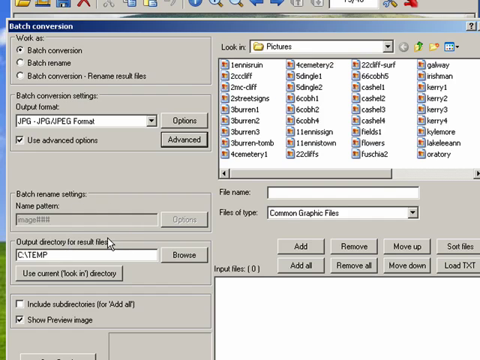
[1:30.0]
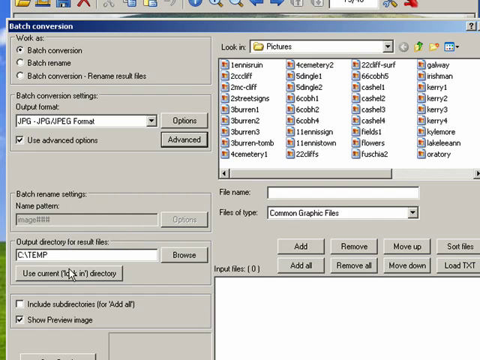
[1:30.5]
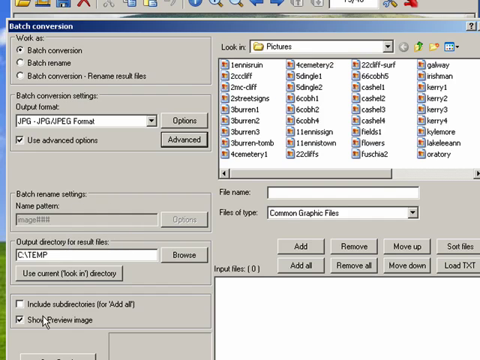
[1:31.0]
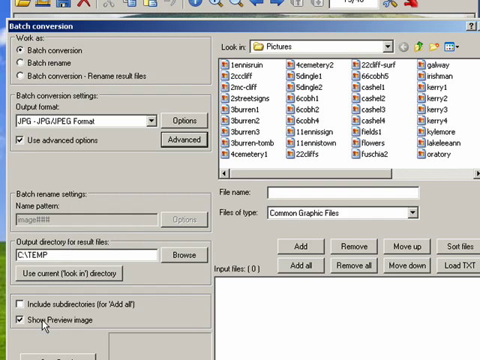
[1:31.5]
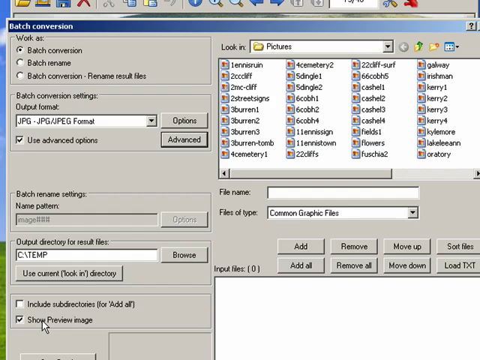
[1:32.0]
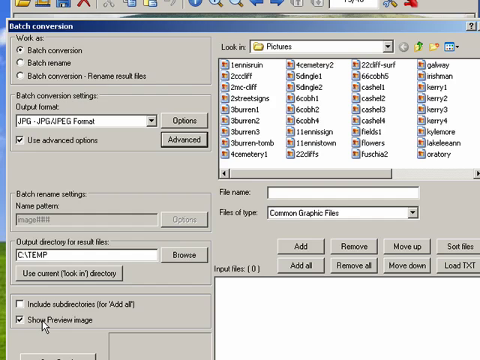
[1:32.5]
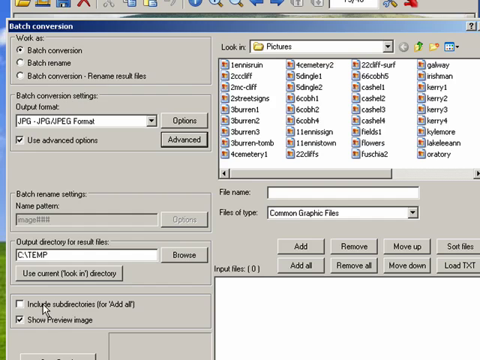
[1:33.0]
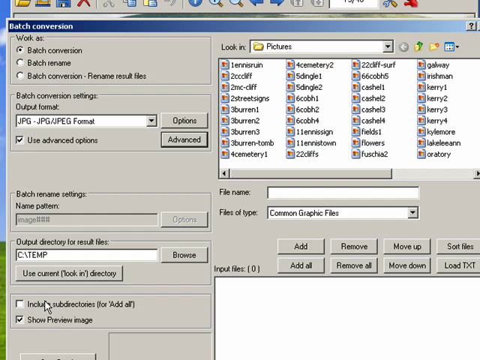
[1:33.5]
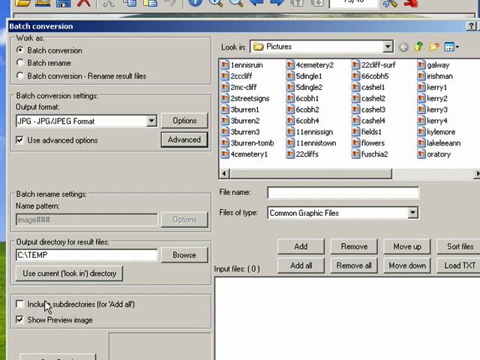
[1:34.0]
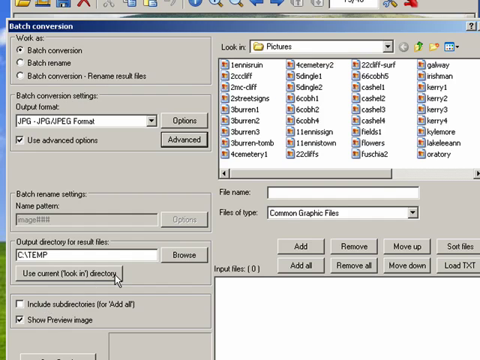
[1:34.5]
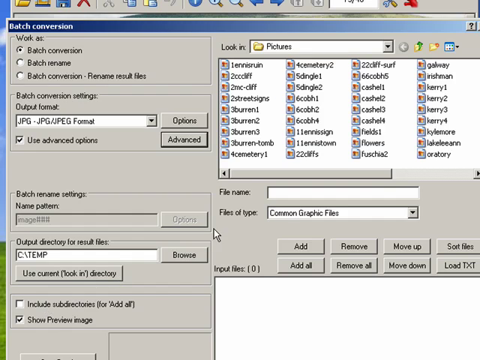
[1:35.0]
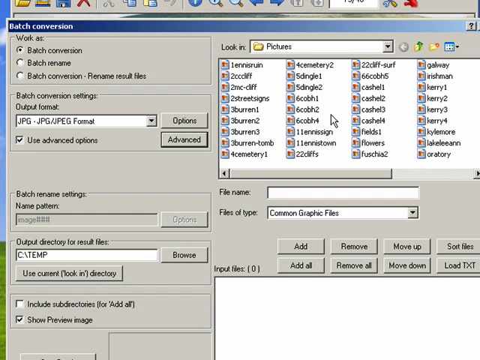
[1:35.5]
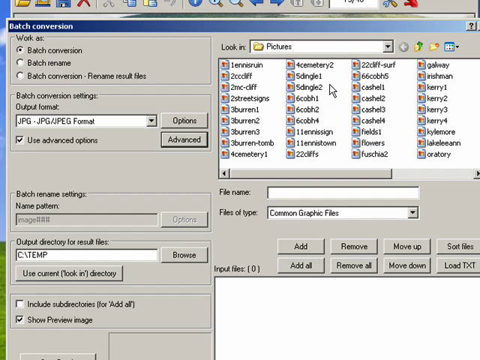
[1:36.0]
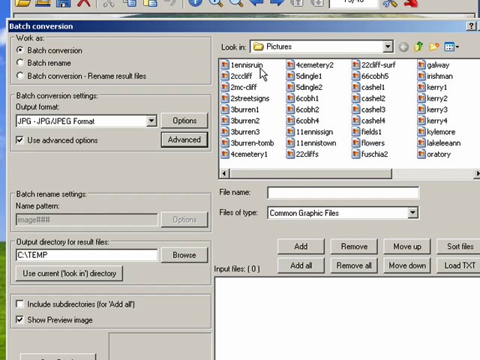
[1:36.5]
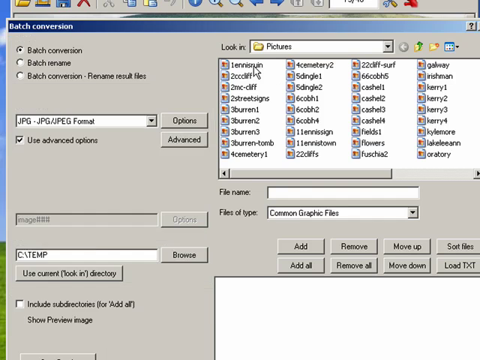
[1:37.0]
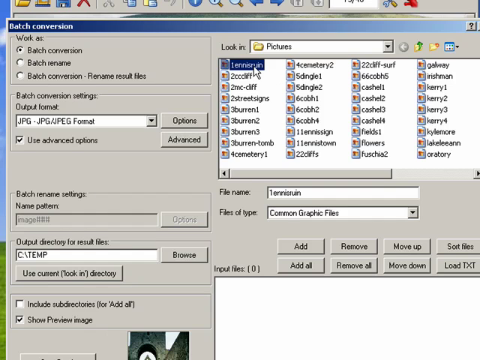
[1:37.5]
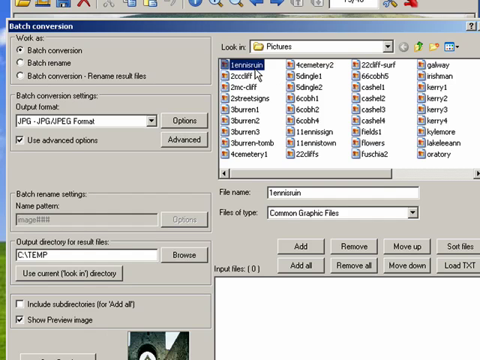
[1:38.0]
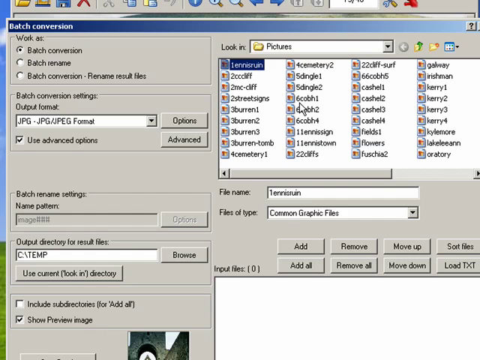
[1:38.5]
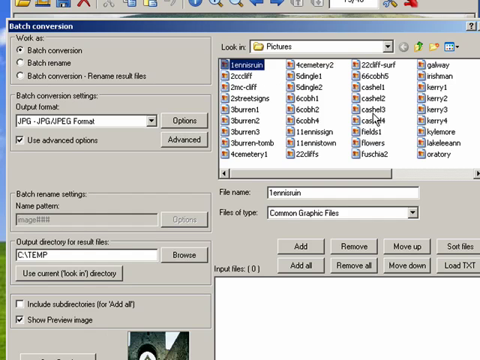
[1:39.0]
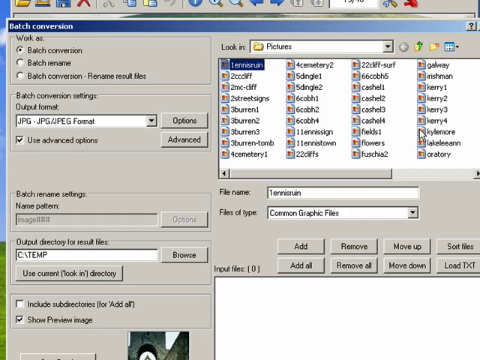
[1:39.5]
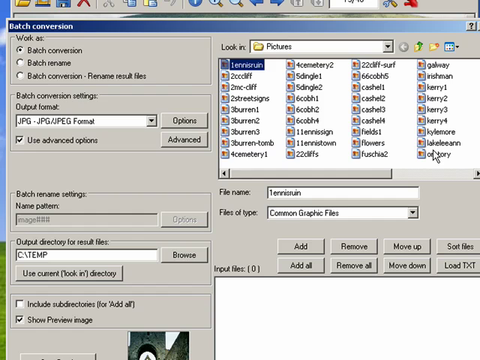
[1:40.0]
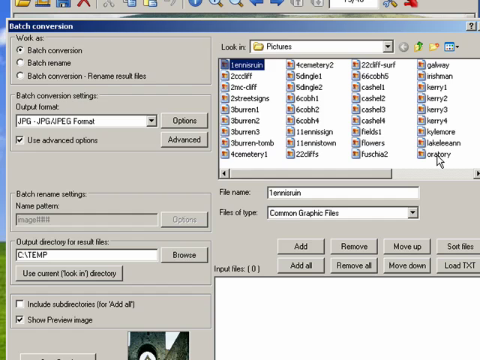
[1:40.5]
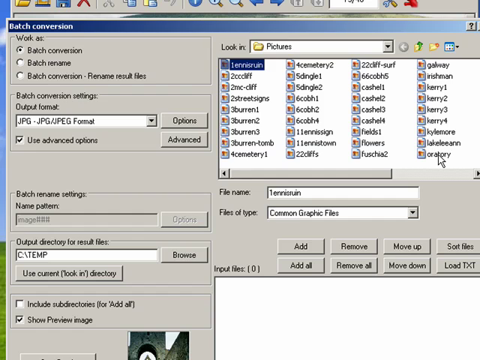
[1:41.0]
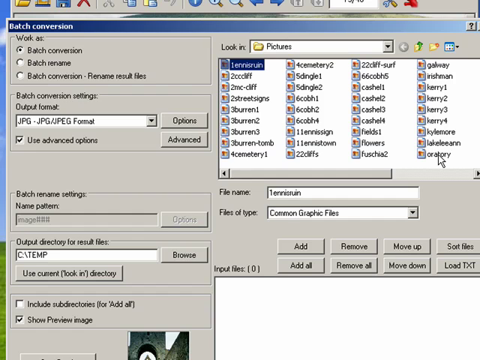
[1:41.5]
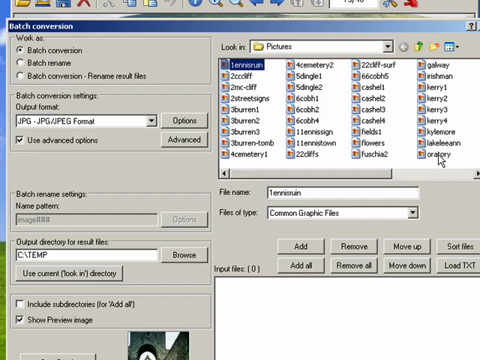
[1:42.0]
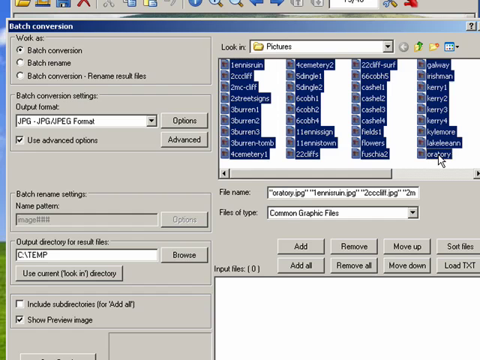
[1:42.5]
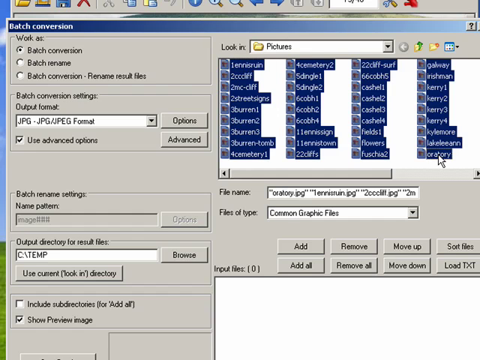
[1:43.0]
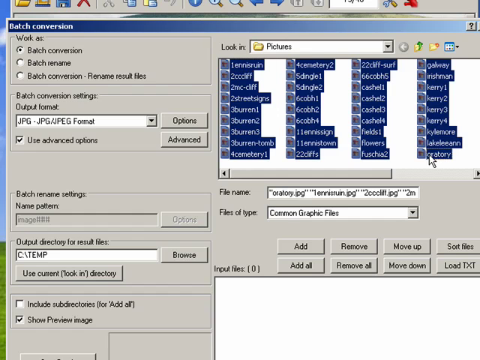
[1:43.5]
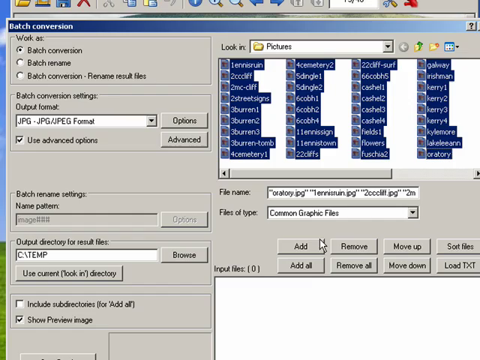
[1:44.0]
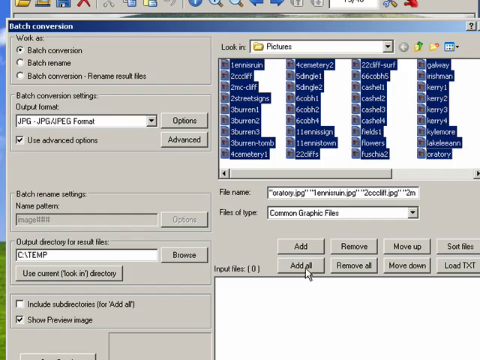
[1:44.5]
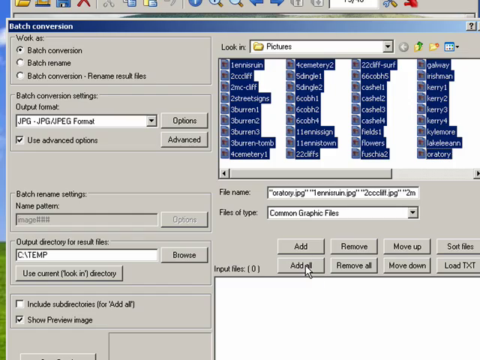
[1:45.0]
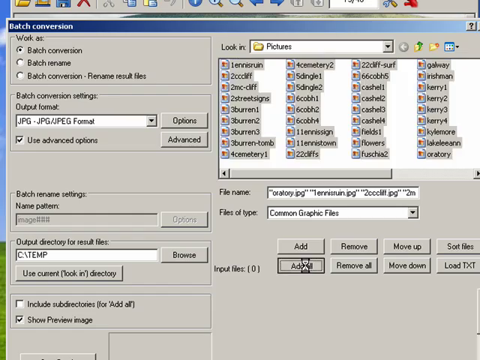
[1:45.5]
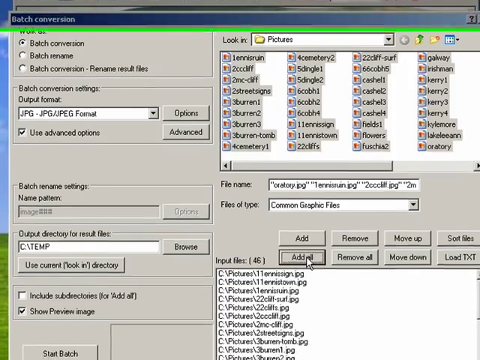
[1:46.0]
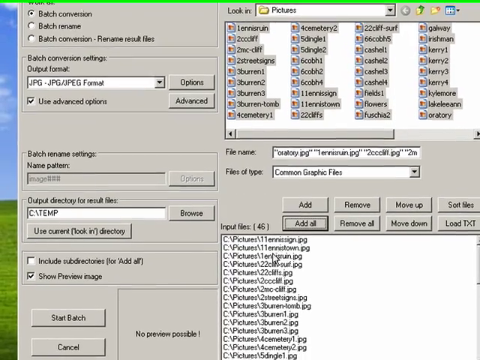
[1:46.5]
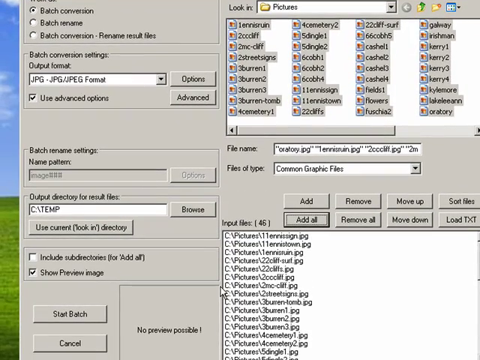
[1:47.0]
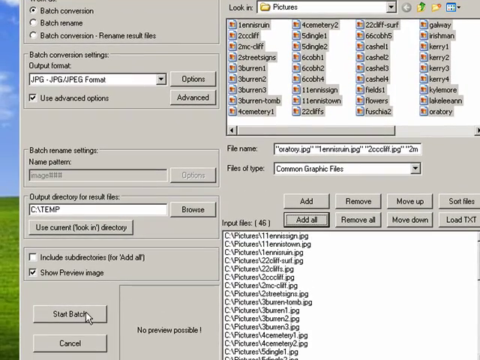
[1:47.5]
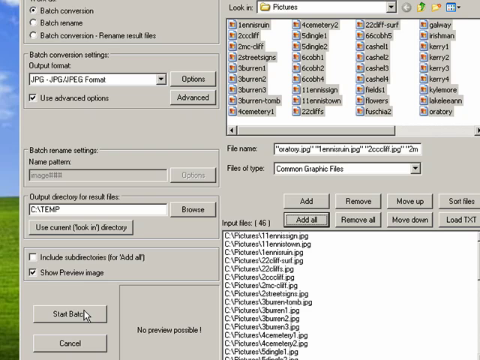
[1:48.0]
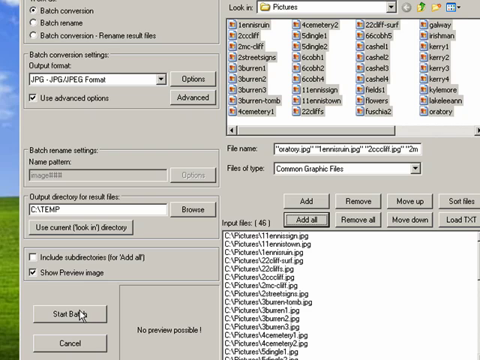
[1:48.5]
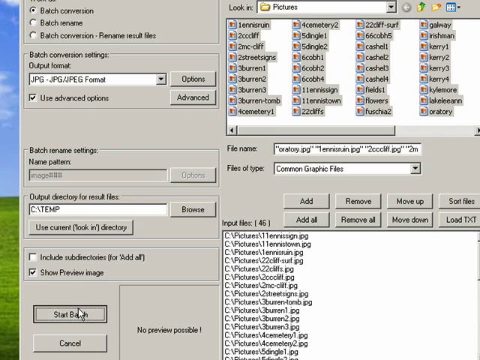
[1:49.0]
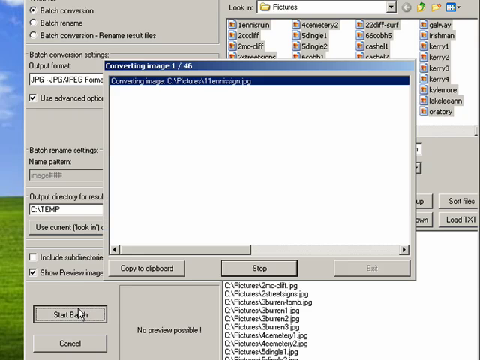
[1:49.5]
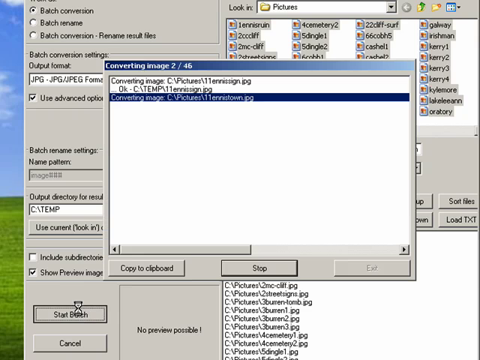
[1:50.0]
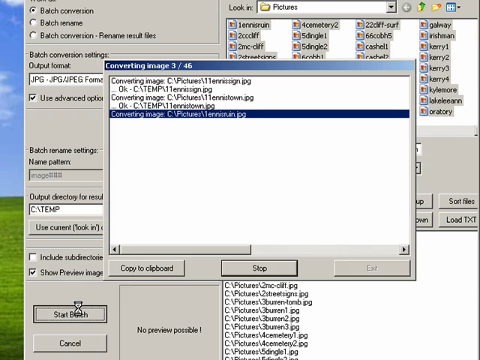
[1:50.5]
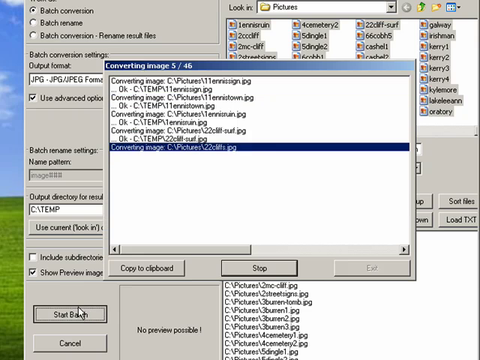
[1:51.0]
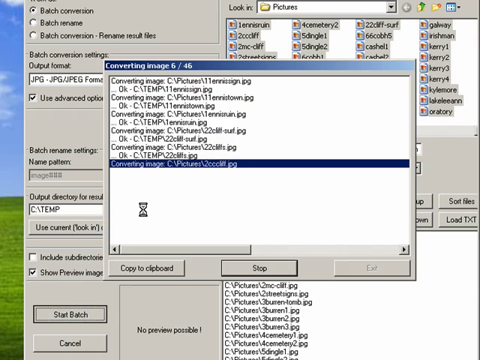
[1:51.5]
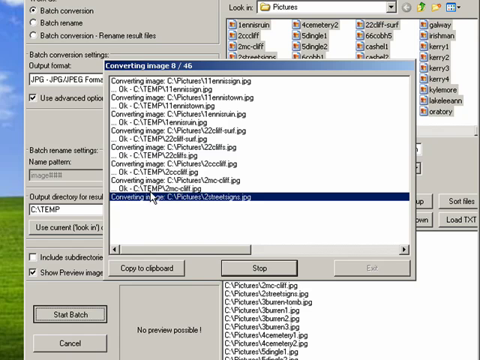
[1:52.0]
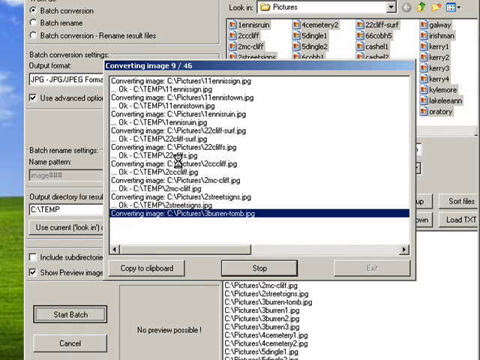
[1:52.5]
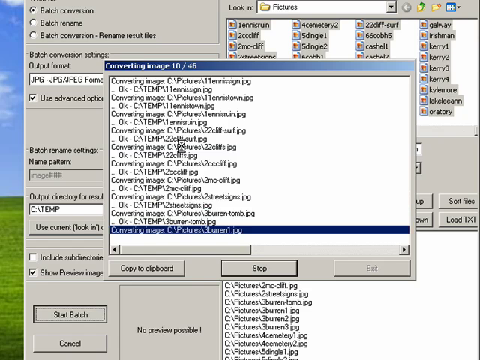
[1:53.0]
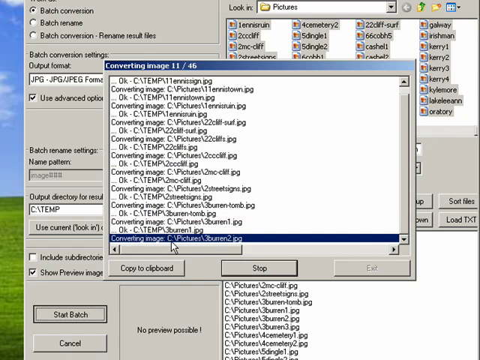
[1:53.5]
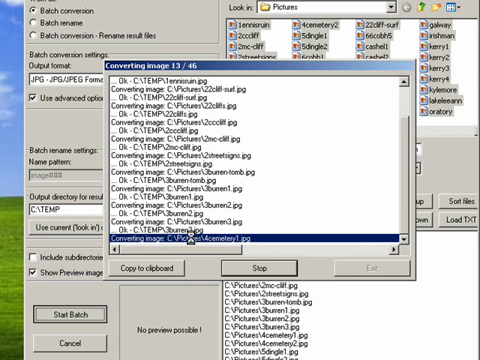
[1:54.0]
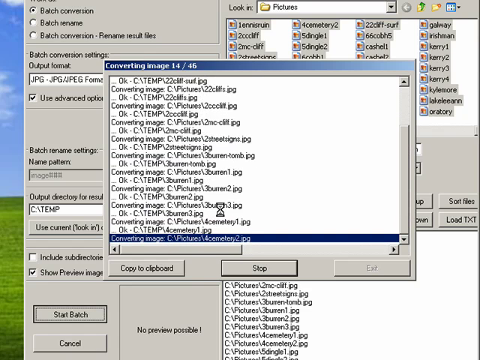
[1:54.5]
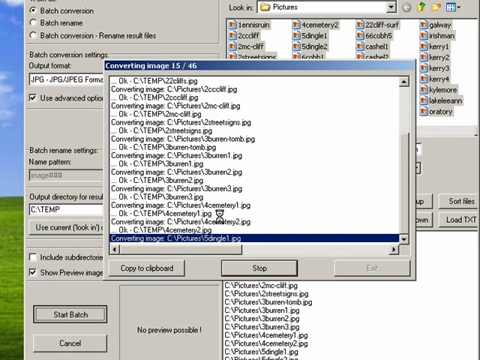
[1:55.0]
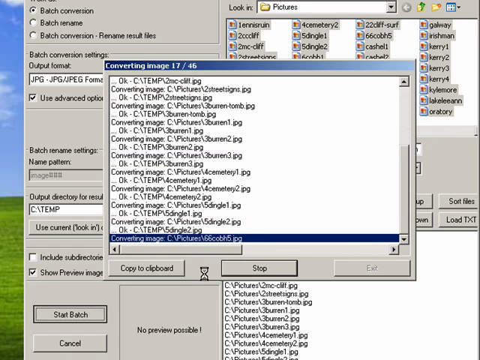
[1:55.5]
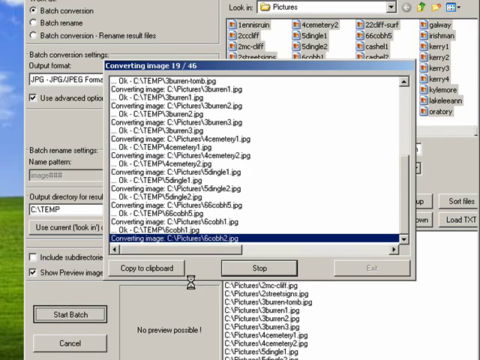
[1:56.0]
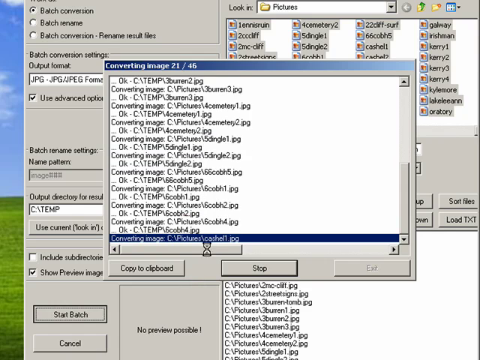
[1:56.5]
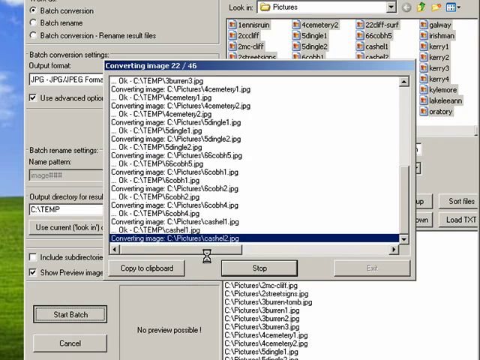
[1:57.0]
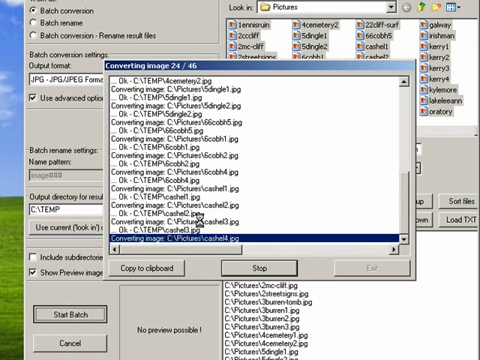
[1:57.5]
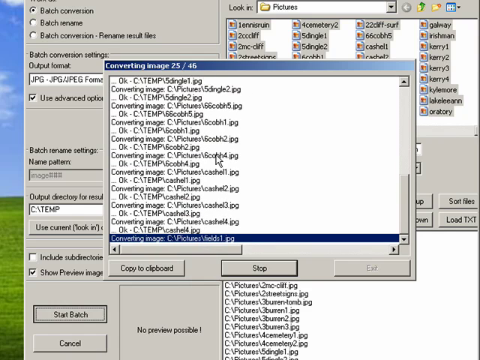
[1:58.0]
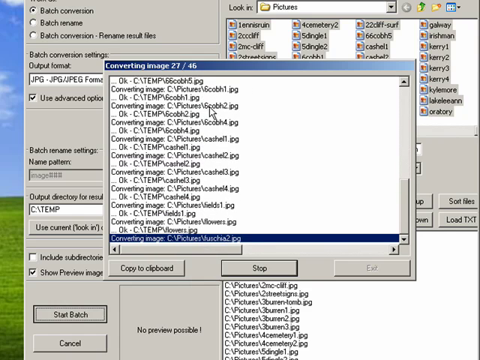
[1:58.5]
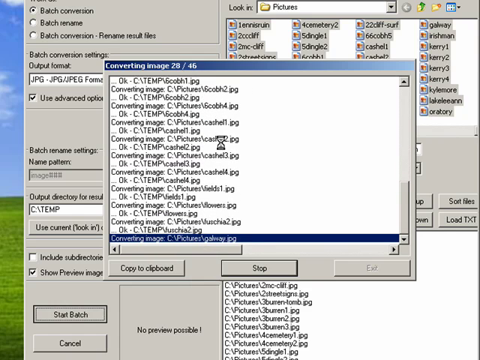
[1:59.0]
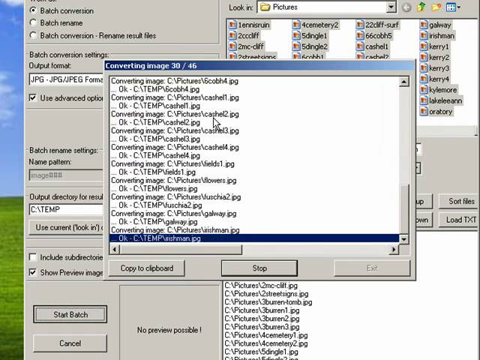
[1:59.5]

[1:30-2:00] An open page titled "Batch conversion" is shown. On the right side, a folder labeled Pictures is open, with multiple files shown within it. An arrow cursor moves around the page several times. It highlights one of the files, labeled "1 ennisruin," in dark blue. The arrow then moves to another file labeled "oratory," and when it is clicked all of the files are highlighted in dark blue. The cursor then clicks the Add all button, and a new box appears with a header at the top that says "Converting image." A list of files appears one by one in the box below as a small hourglass icon flashes on the screen periodically.